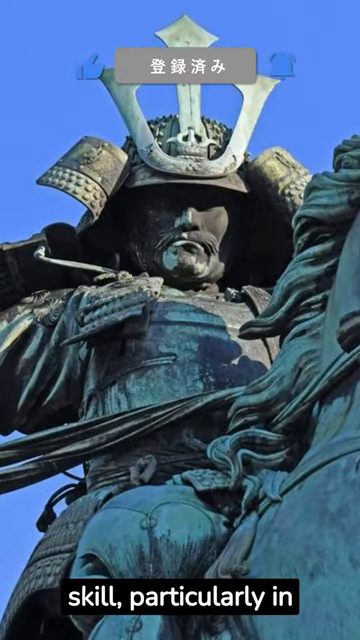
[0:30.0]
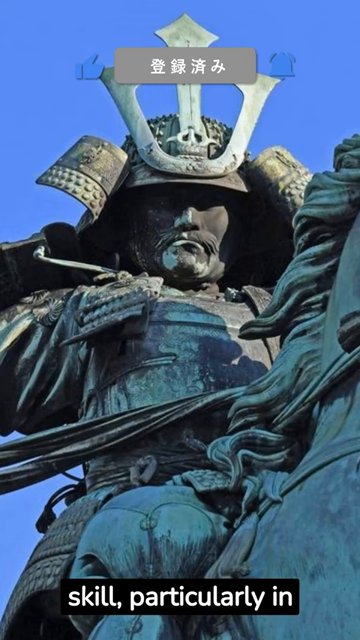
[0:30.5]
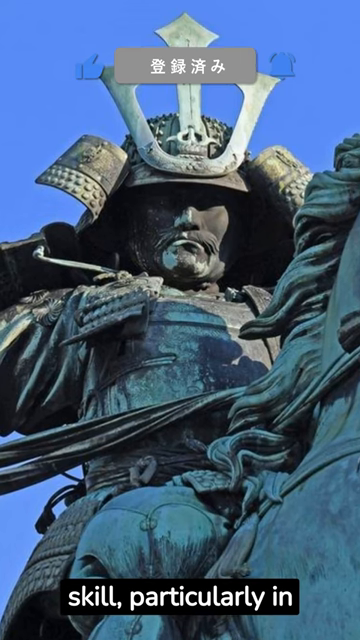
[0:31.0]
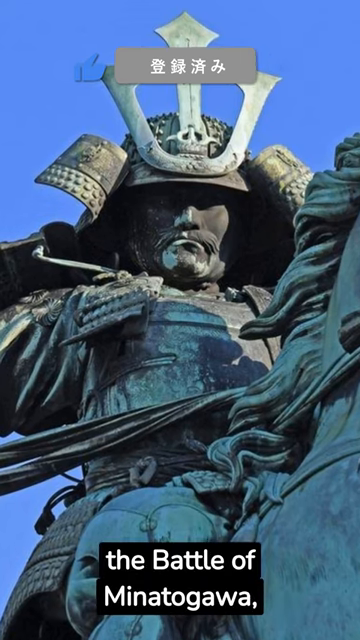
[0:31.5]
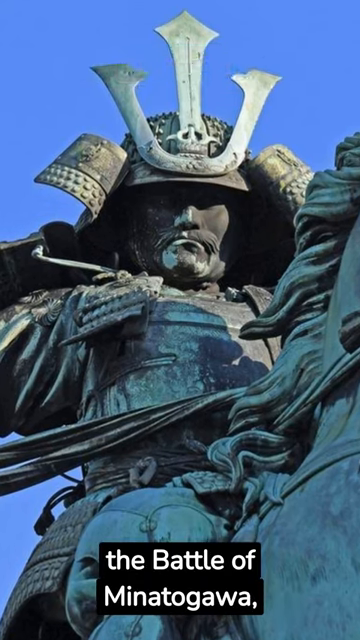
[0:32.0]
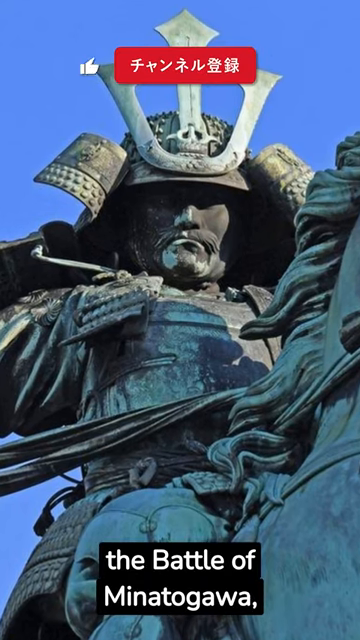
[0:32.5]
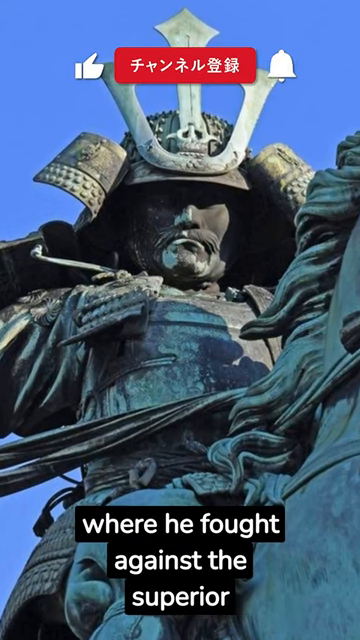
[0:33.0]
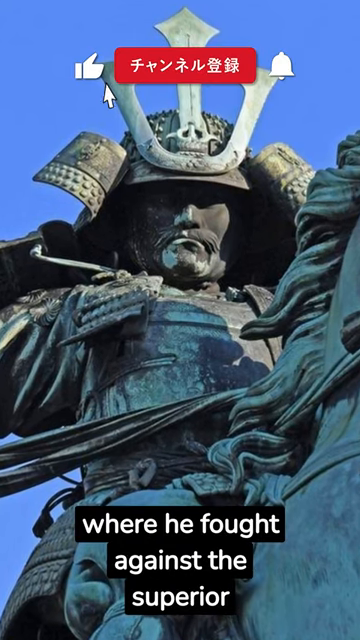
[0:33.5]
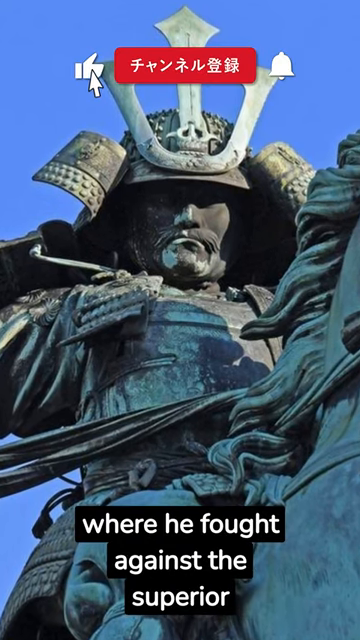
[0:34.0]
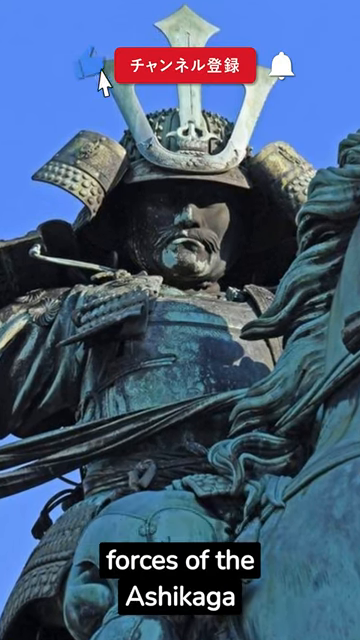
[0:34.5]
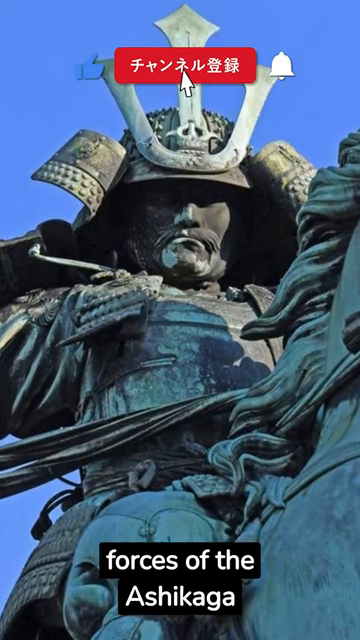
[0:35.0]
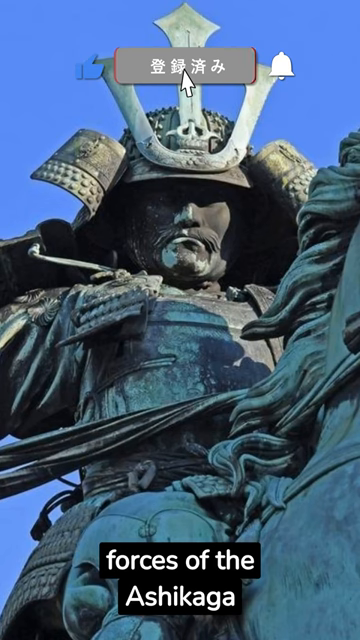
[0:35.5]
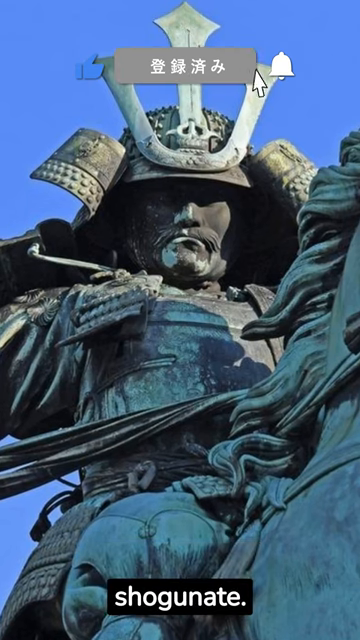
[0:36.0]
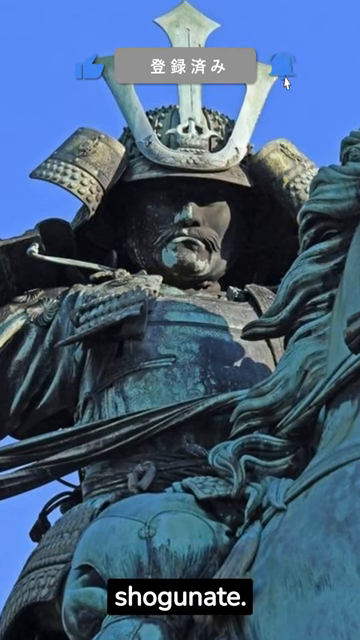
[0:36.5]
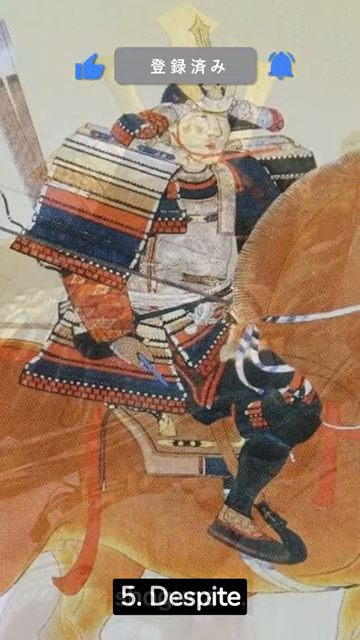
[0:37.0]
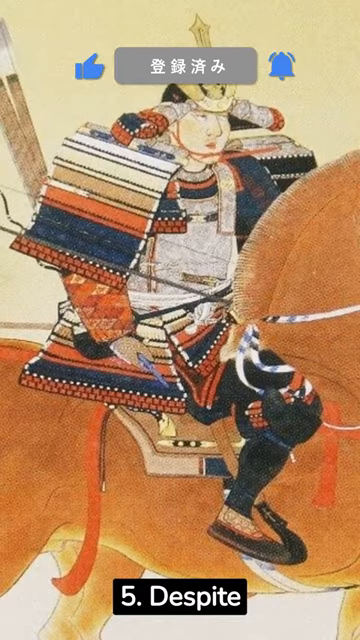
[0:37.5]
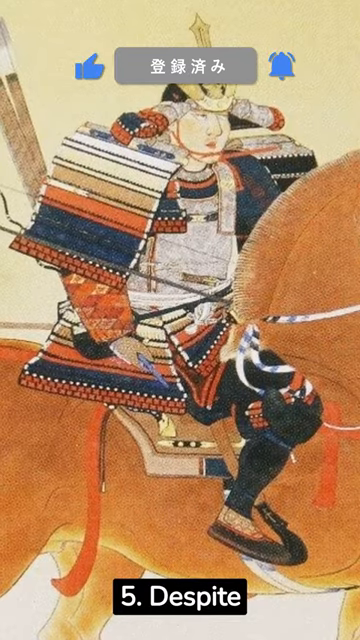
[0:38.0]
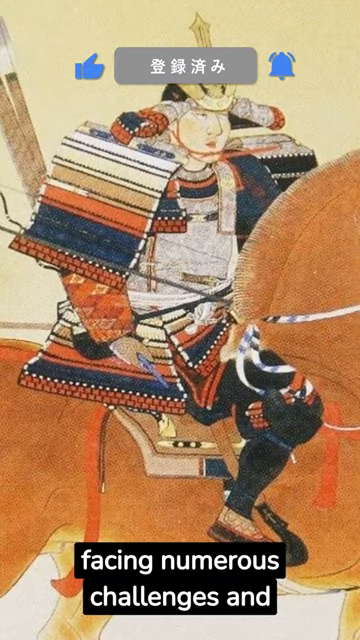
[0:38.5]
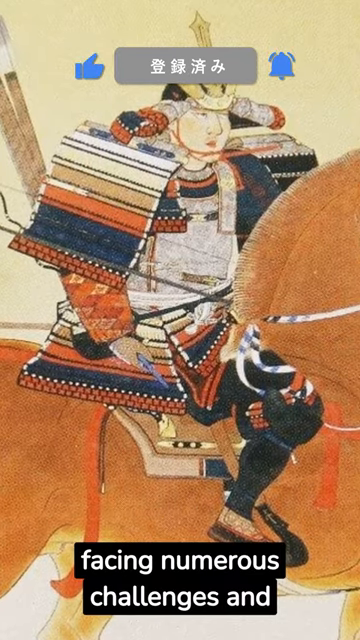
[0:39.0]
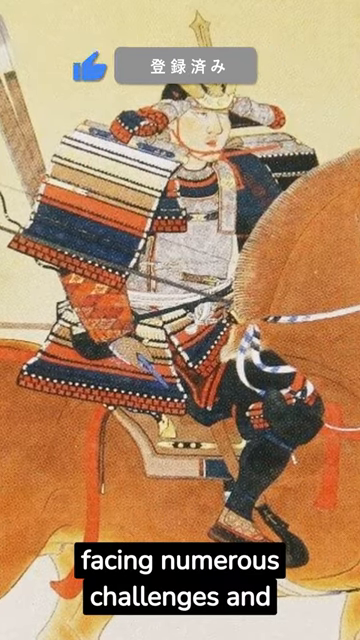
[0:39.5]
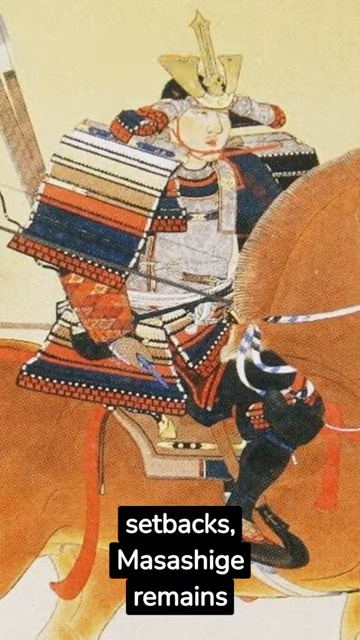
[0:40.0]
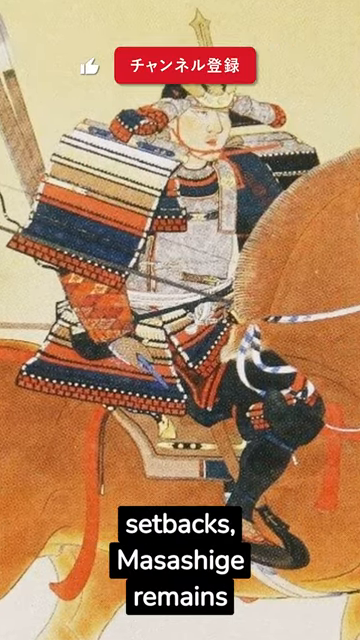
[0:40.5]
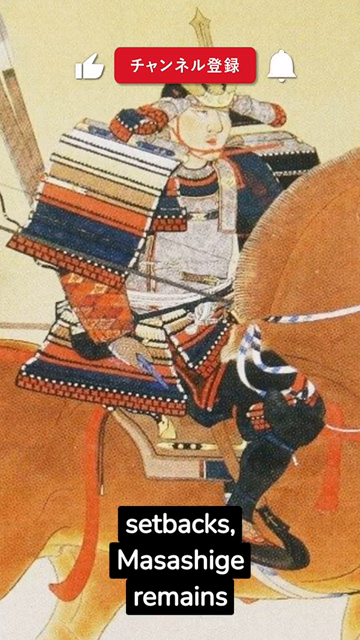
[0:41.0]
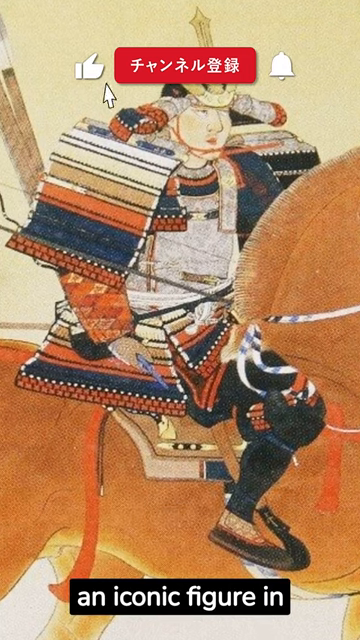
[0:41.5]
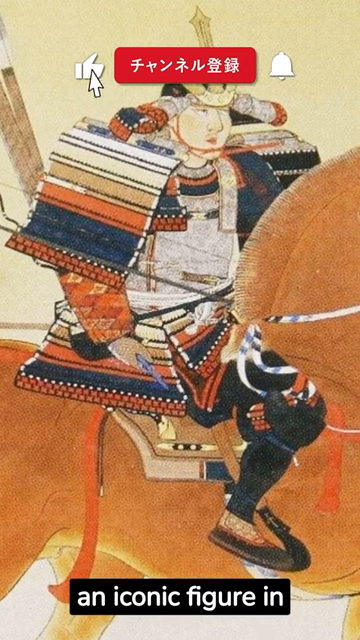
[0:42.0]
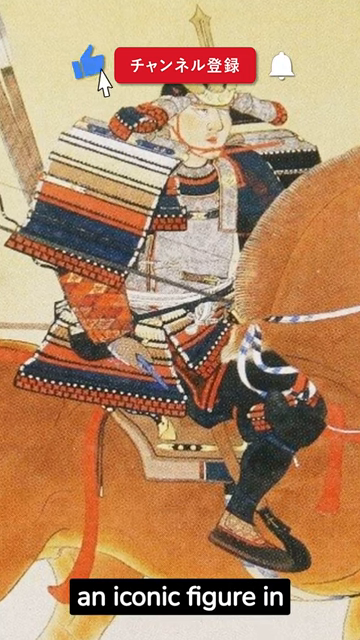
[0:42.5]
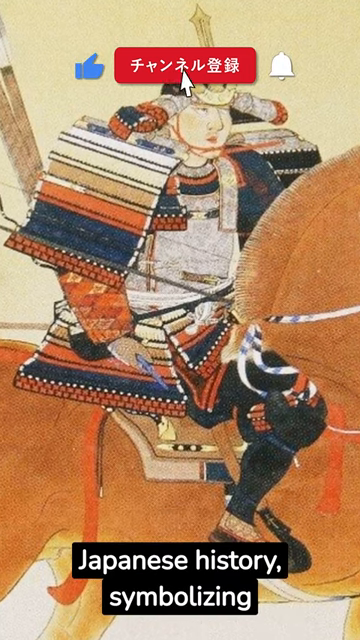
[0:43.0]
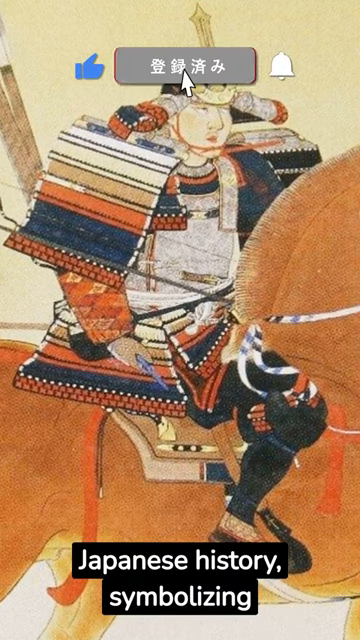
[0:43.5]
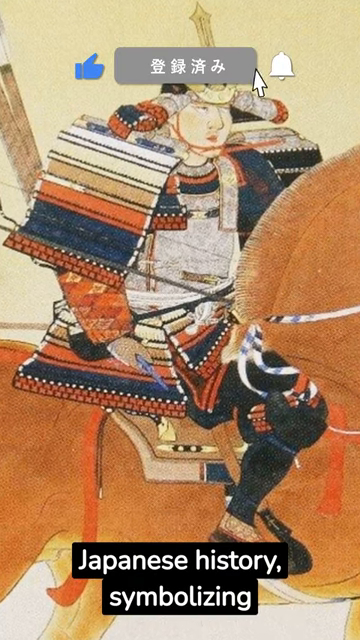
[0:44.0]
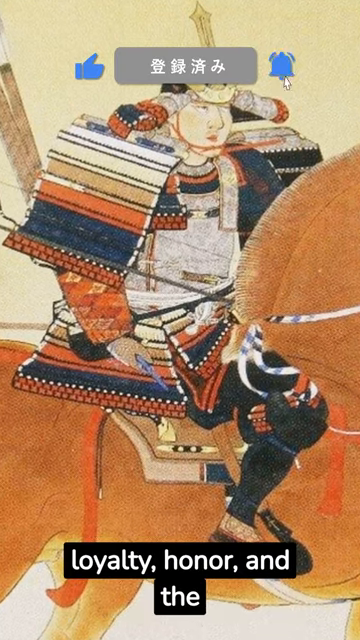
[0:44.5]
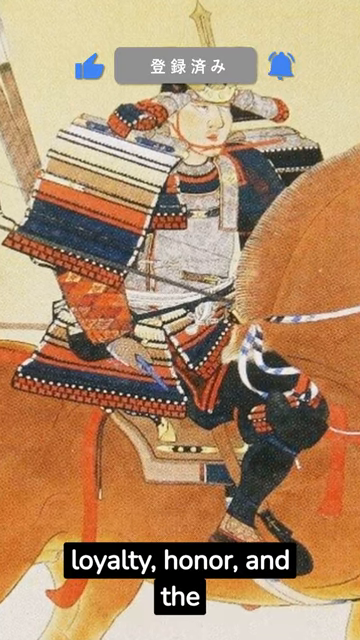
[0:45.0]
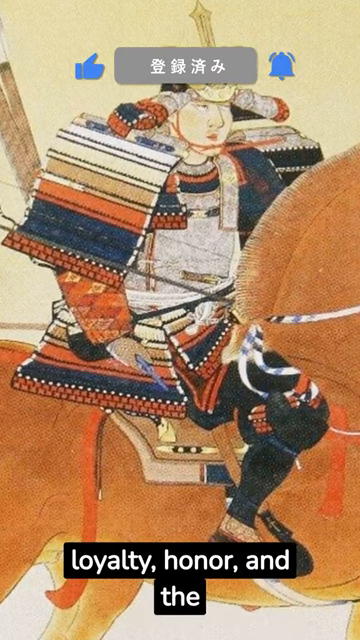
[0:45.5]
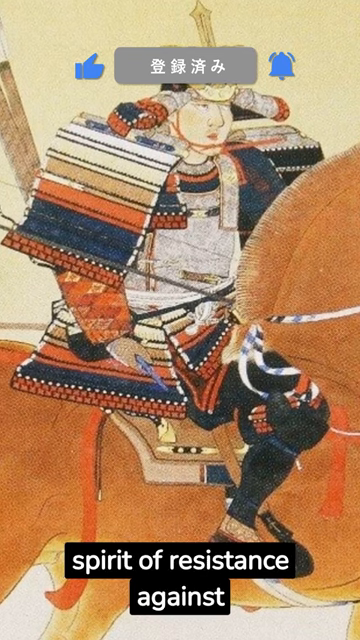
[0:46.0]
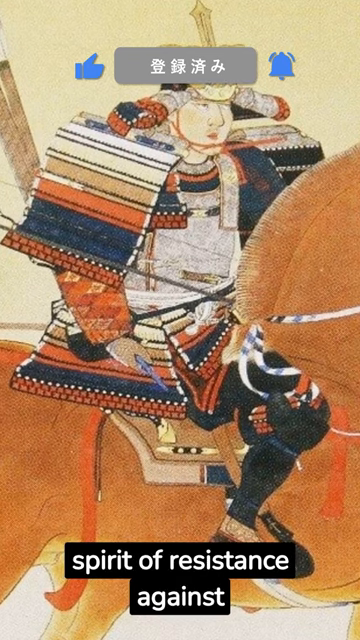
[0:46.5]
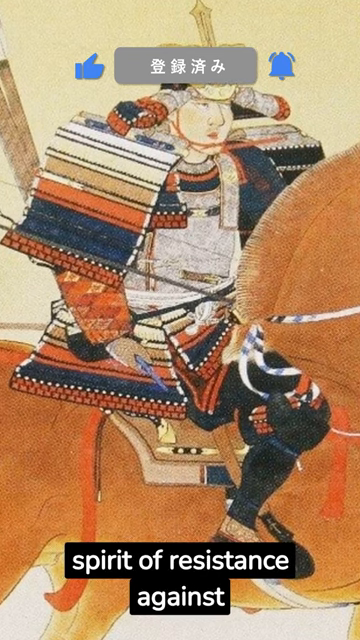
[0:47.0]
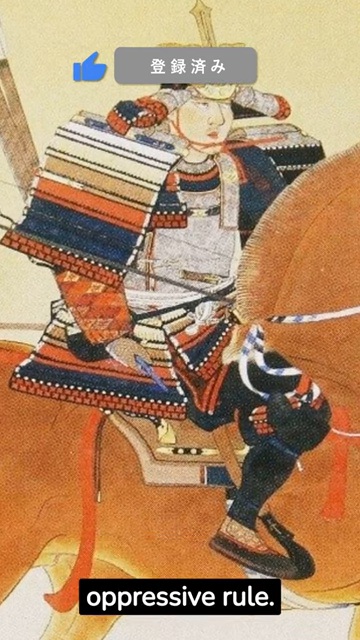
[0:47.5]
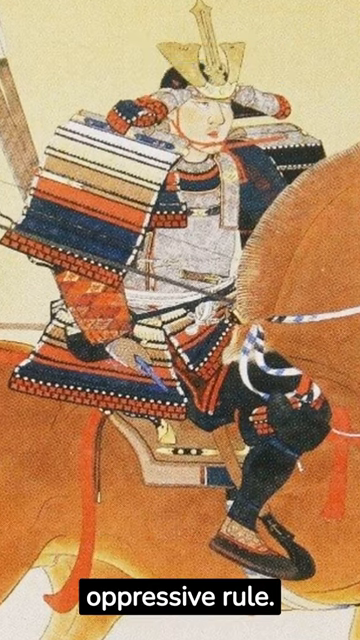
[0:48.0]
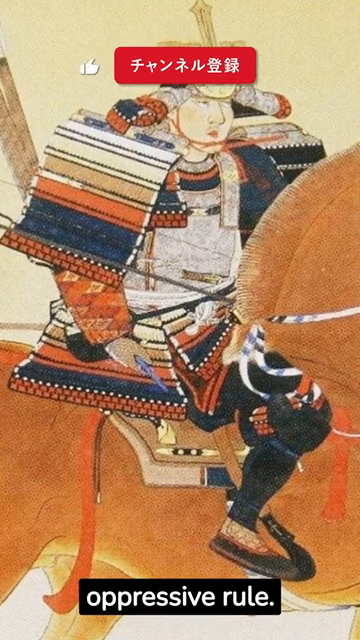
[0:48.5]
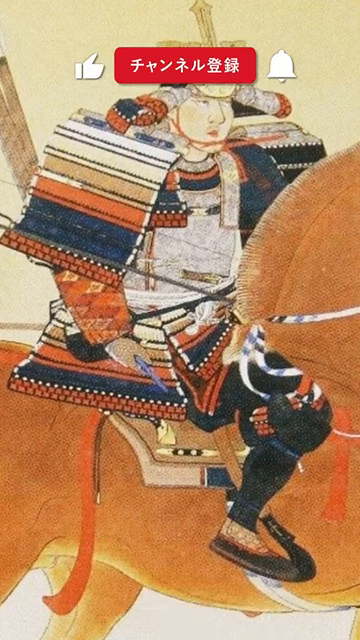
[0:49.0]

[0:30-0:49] The same statue image continues. At the bottom the text reads "Skill, particularly in the Battle of Minatogawa, where he fought against the superior forces of the Ashikaga," followed by "Shogunate". The camera continues to zoom in on the samurai riding the horse, seen from a very low angle. The video then transitions to a new drawing in a traditional Japanese style showing a man with a very large nose who also appears to be riding a horse; the horse appears to be very large. The man appears to be holding a bow and has a quiver of arrows behind him. The camera zooms in slowly on this image as well. At the bottom the text reads "Facing numerous challenges and setbacks, Masashige remains an iconic figure in Japanese history, symbolizing loyalty, honor, and the spirit of resistance against oppressive rule."